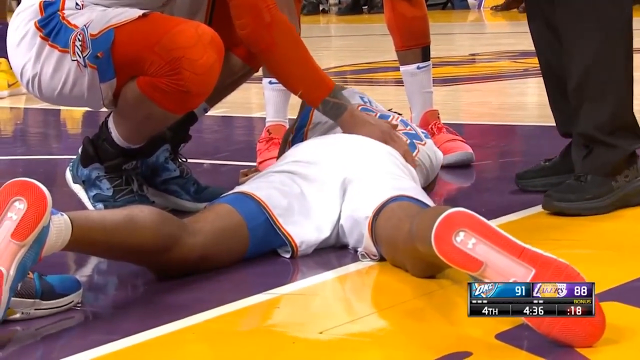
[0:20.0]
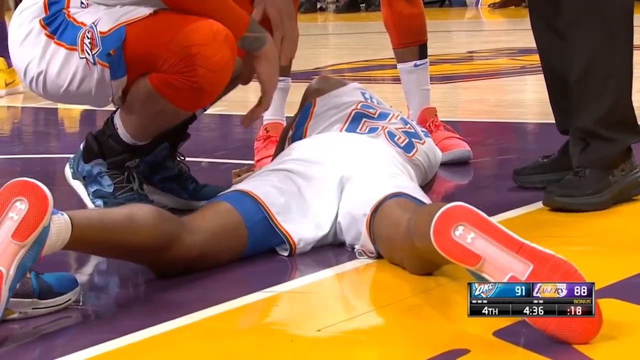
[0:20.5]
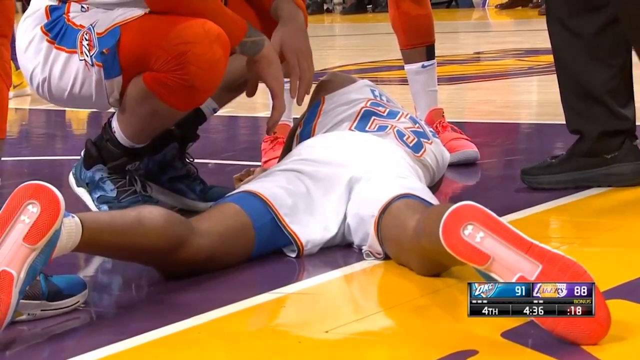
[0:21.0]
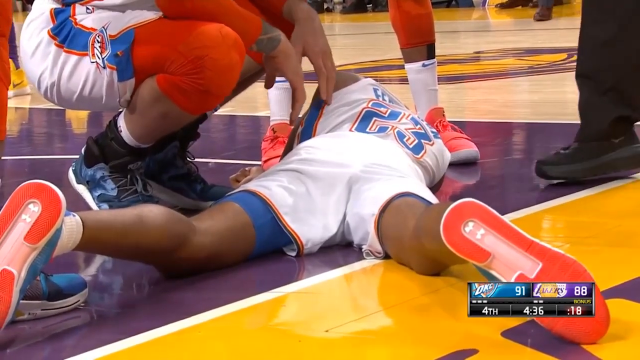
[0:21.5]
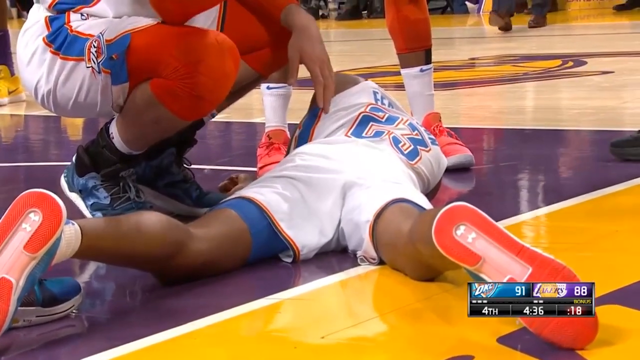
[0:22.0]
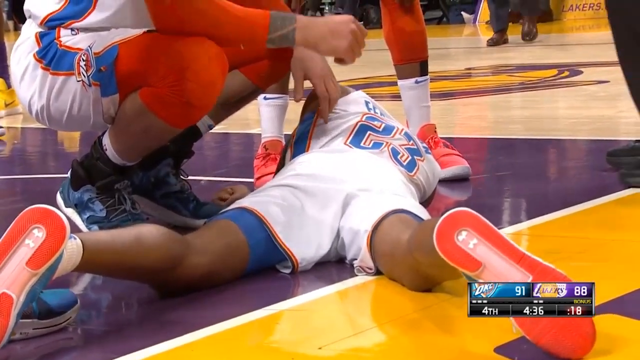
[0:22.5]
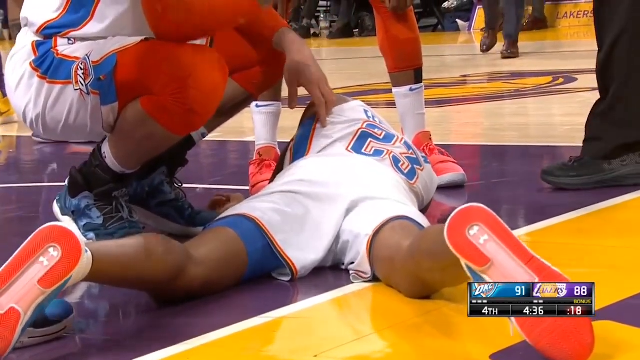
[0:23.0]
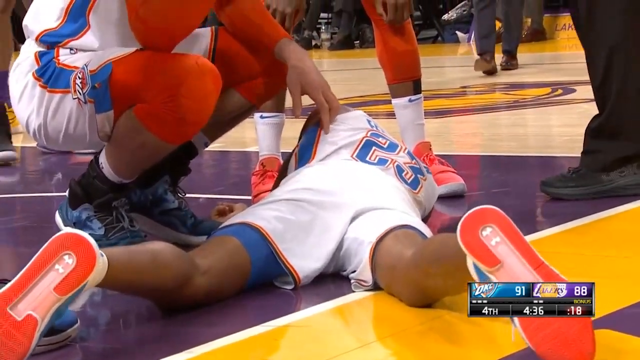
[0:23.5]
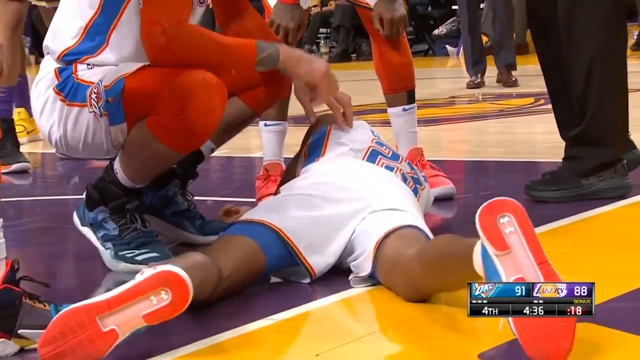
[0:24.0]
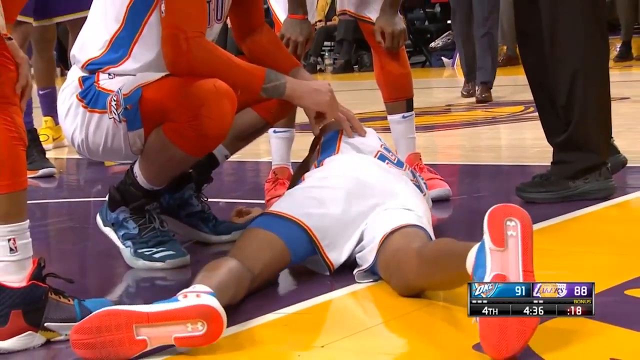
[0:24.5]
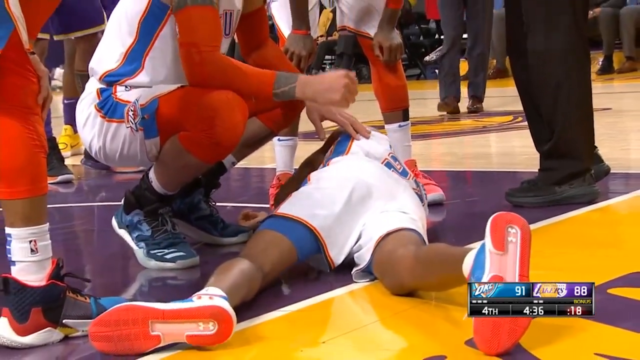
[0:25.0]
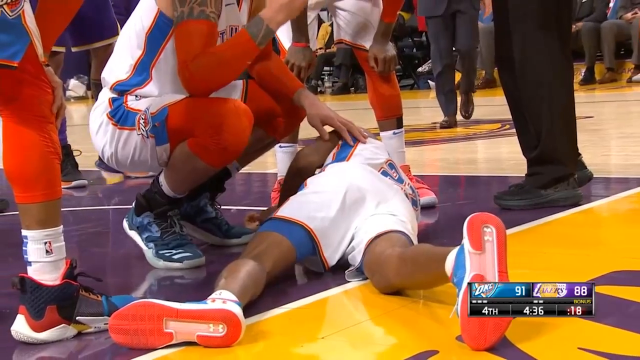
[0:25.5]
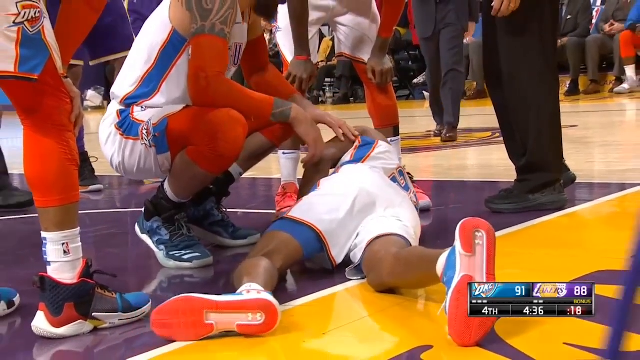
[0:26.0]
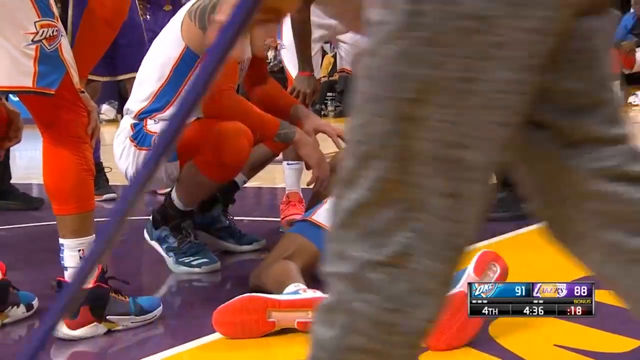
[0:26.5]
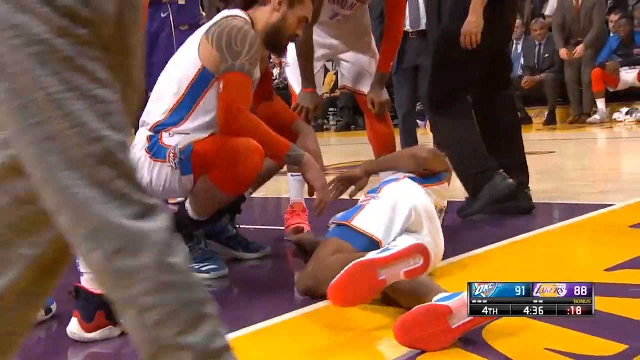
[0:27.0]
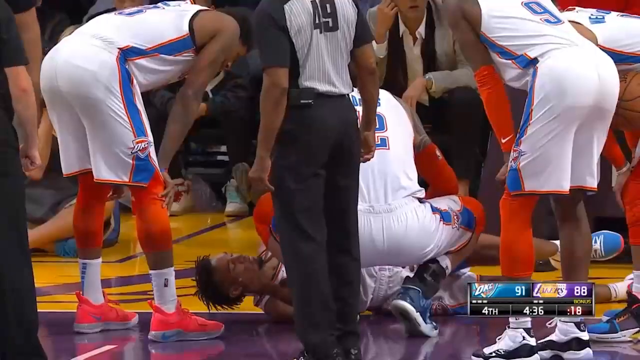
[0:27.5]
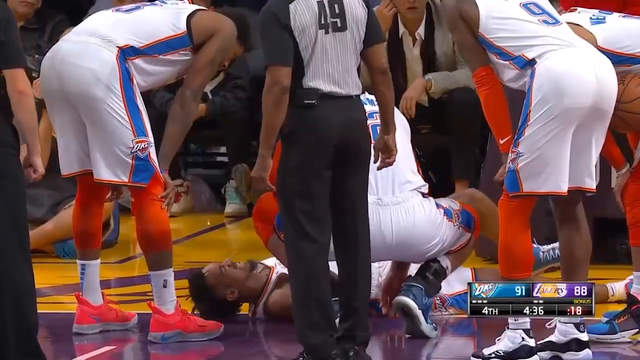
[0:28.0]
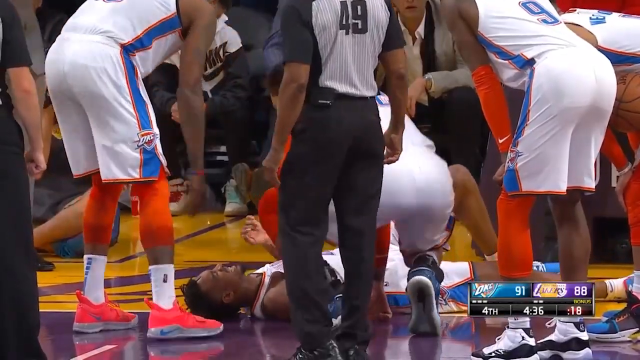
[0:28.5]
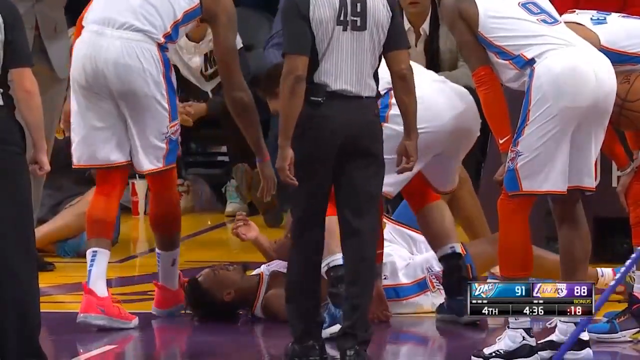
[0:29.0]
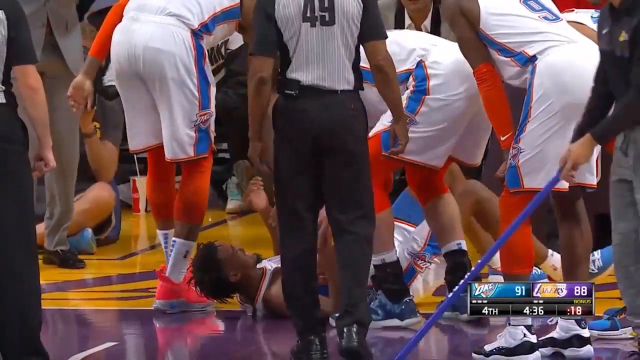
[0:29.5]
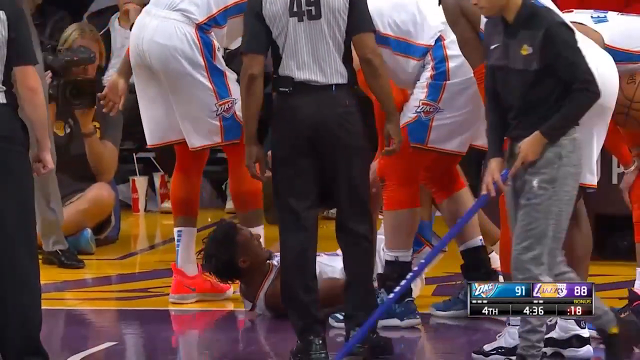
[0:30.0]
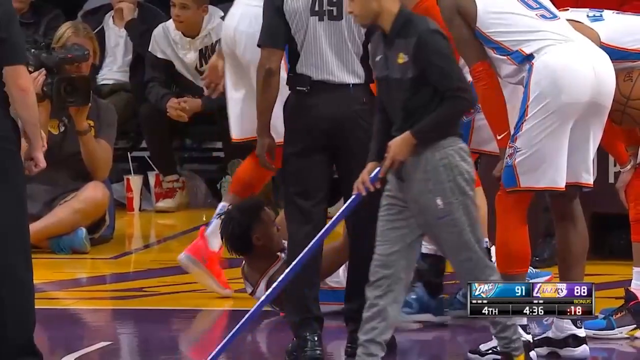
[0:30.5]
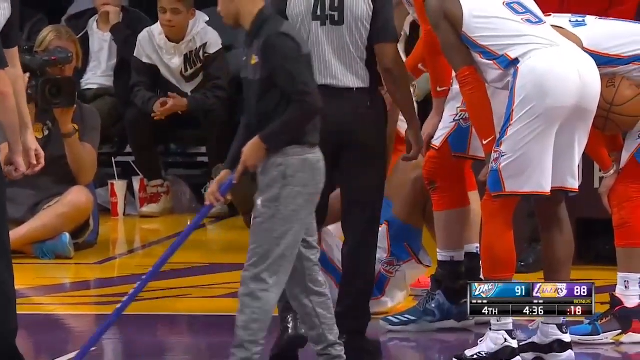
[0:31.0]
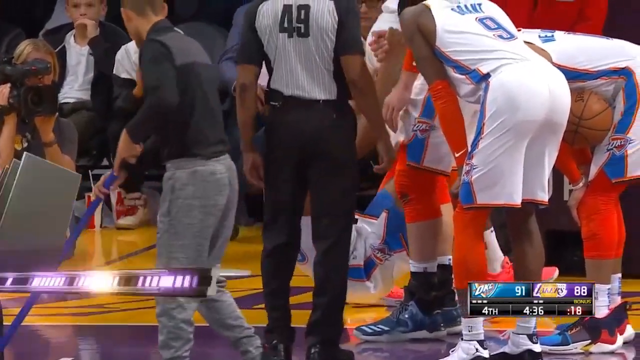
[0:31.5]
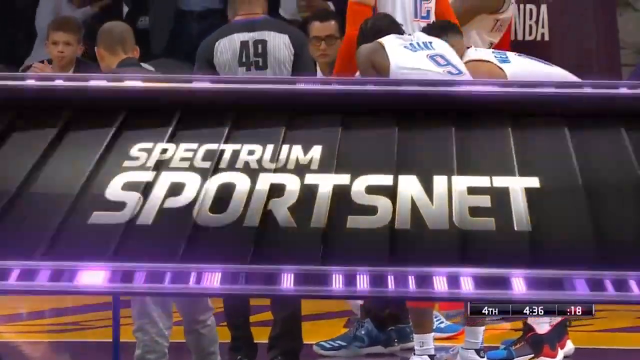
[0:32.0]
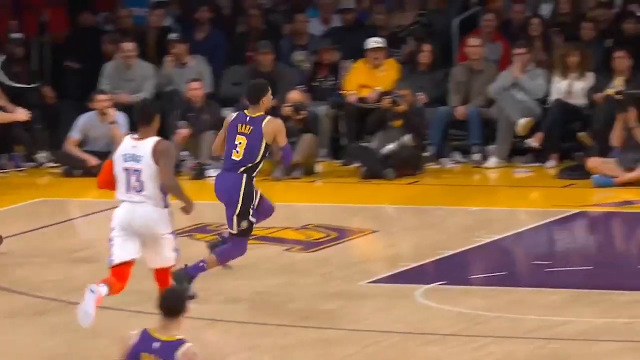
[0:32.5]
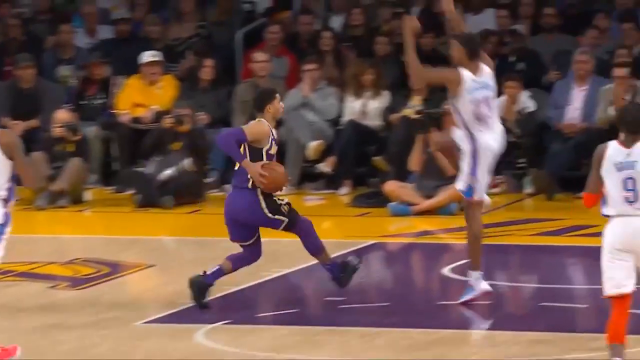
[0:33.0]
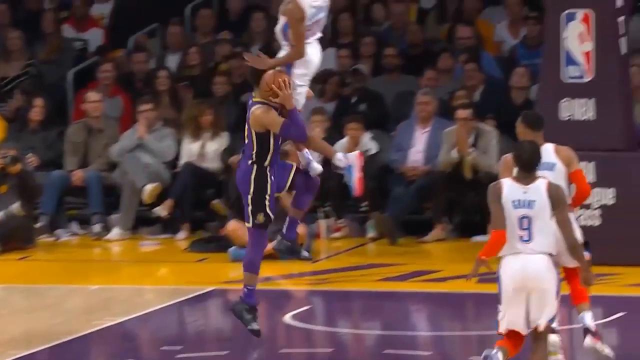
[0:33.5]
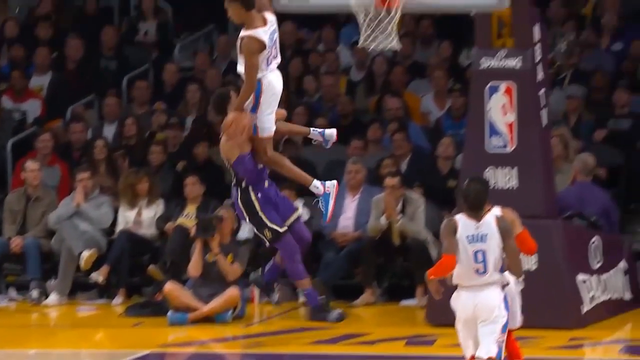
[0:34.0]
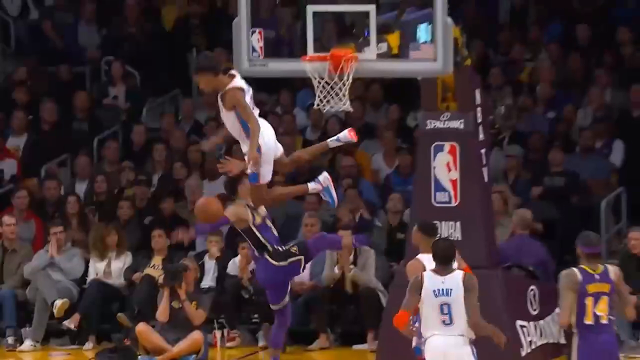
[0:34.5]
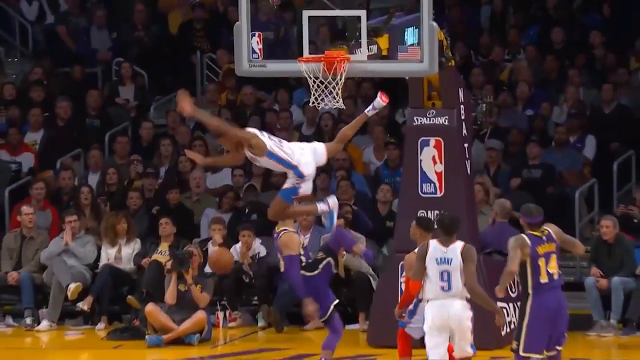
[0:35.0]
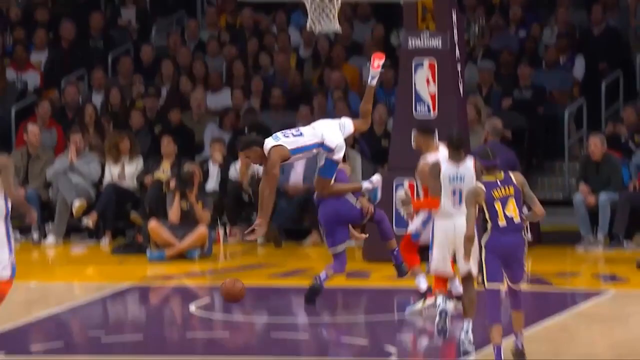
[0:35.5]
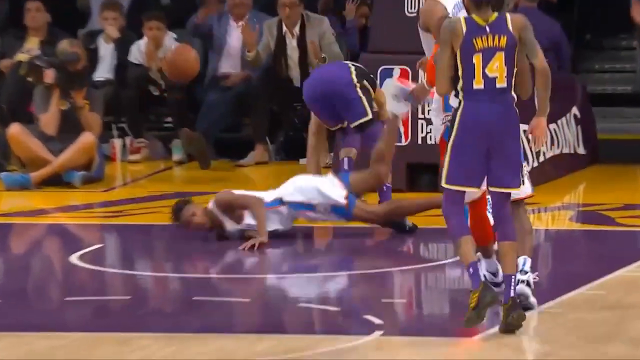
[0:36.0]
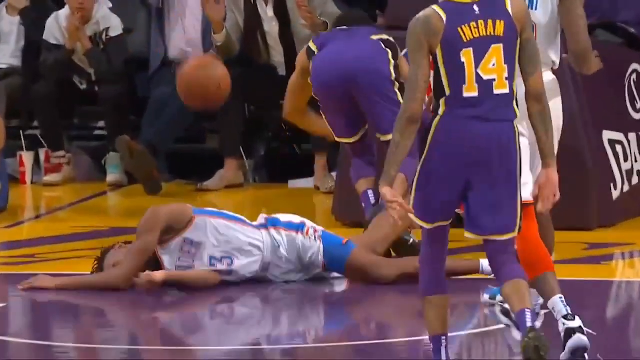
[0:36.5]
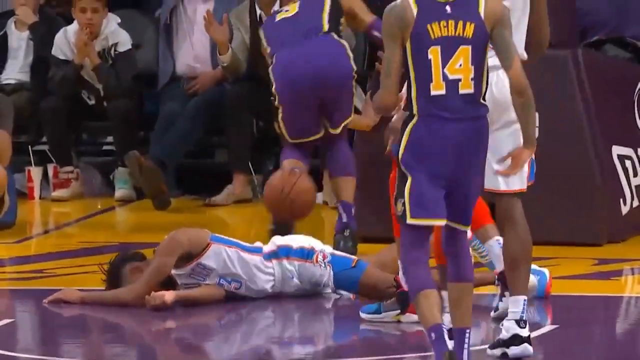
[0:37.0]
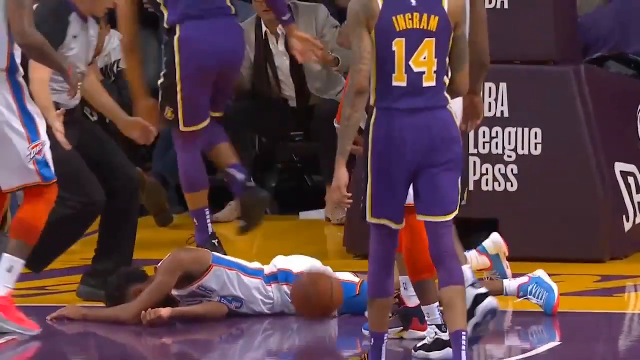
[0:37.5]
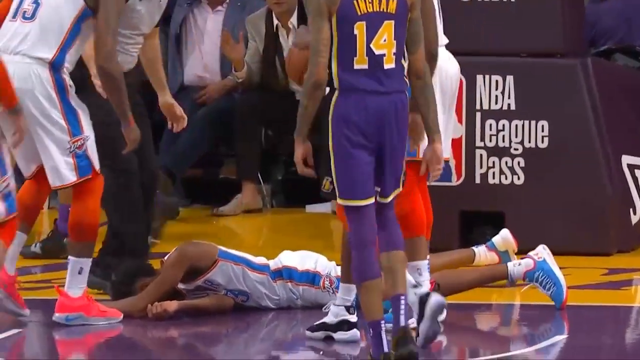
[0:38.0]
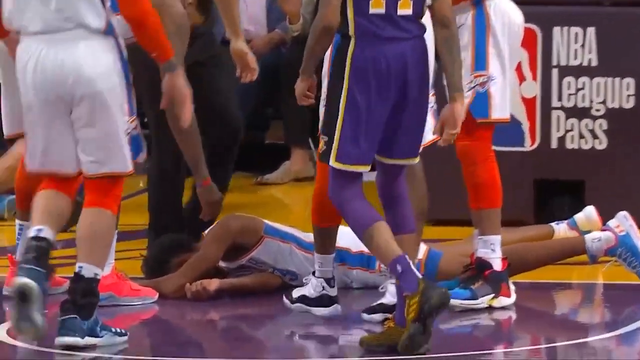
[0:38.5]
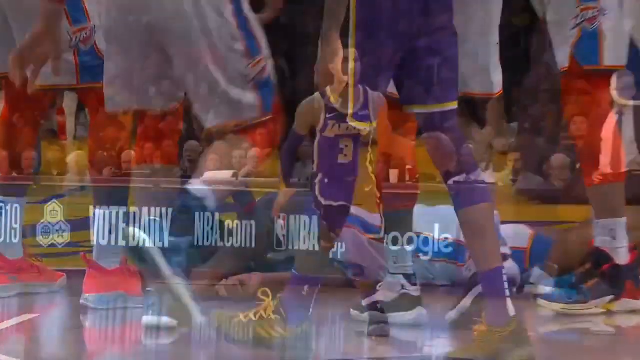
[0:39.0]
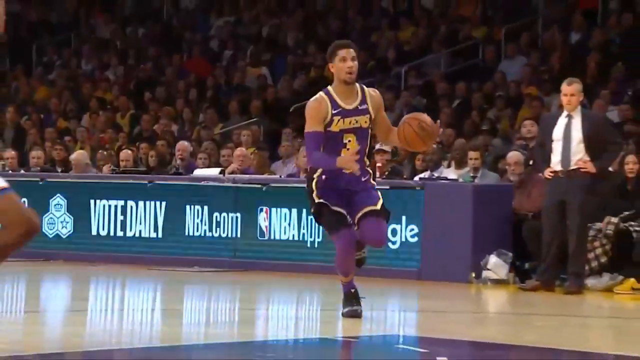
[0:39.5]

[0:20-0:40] An Oklahoma City player lies laid out on the floor on his stomach while a teammate squats over him with his hands on the side of the player. The game is being played at the Los Angeles Lakers, the home team, with Oklahoma City visiting. The score on the lower right reads 91 for Oklahoma City and 88 for Los Angeles; it is the fourth quarter with four minutes and 36 seconds left and 18 seconds on the shot clock. Oklahoma City has three timeouts and the Lakers have two. The player on the ground is number 23, and his teammate looks at him; he appears about to be helped up and seems to be okay.